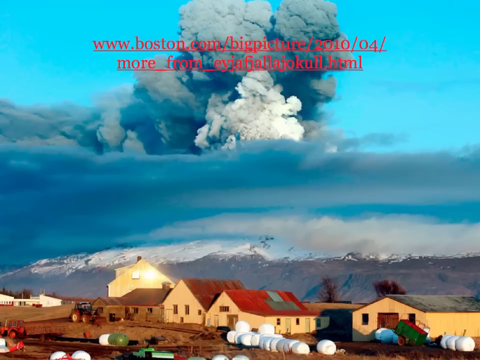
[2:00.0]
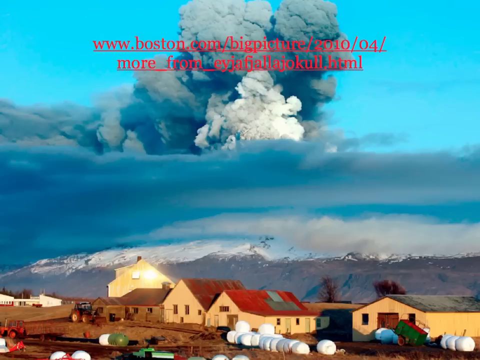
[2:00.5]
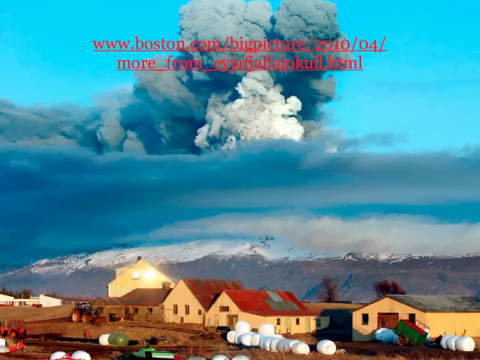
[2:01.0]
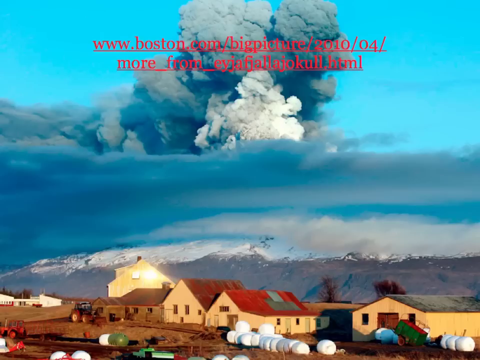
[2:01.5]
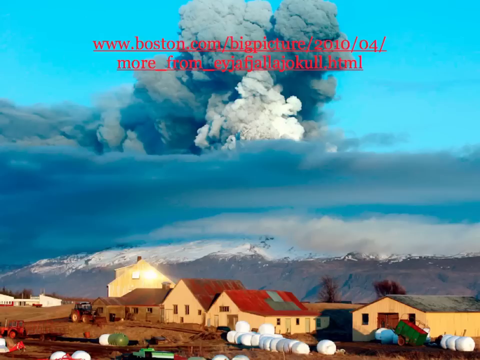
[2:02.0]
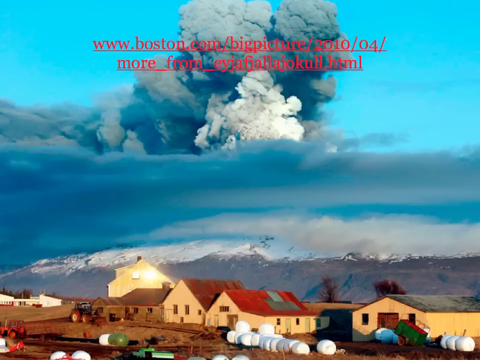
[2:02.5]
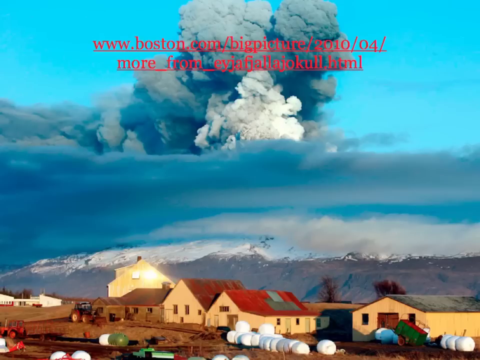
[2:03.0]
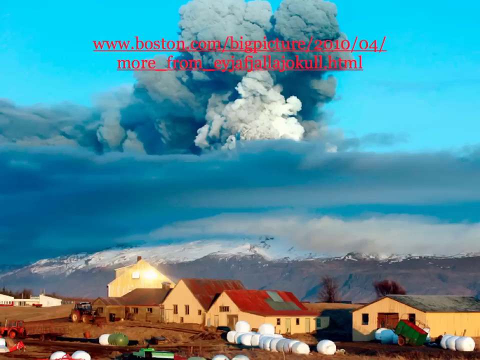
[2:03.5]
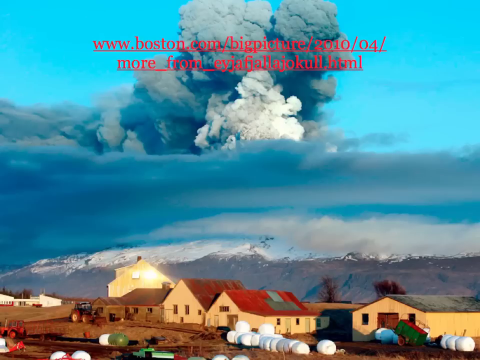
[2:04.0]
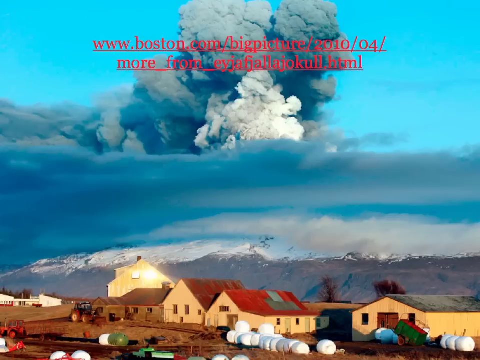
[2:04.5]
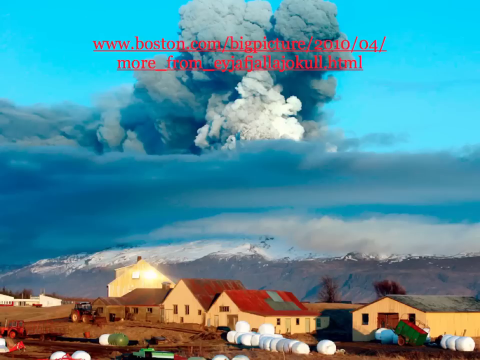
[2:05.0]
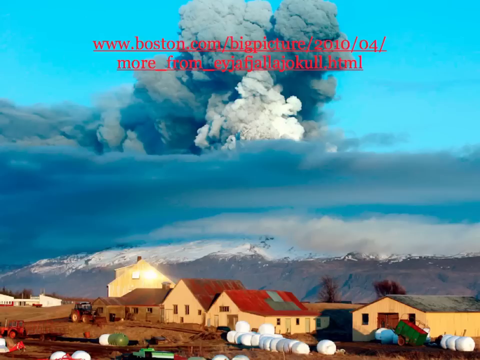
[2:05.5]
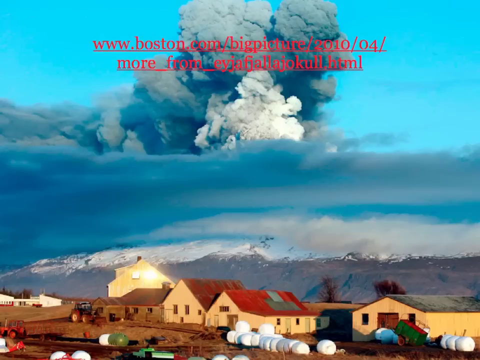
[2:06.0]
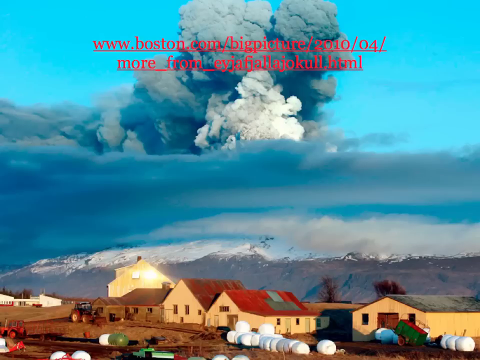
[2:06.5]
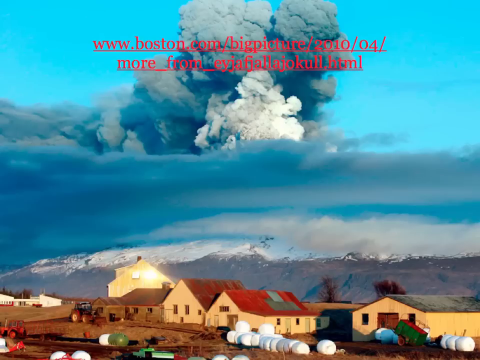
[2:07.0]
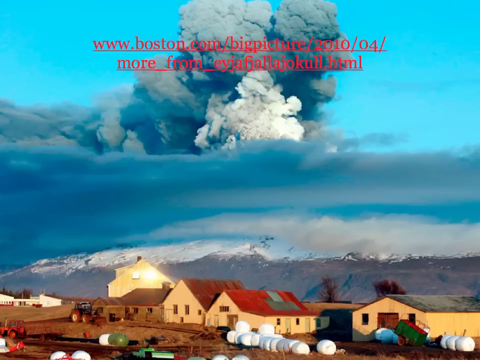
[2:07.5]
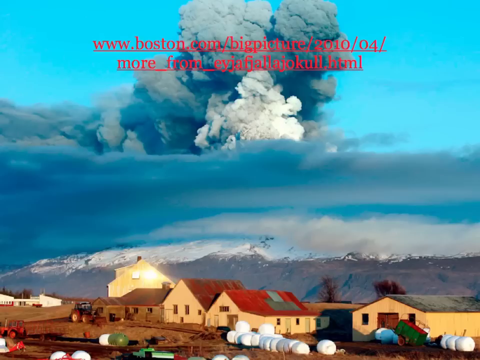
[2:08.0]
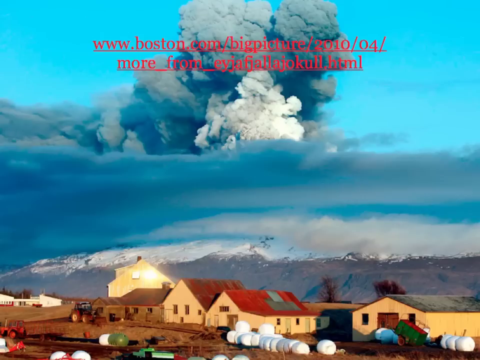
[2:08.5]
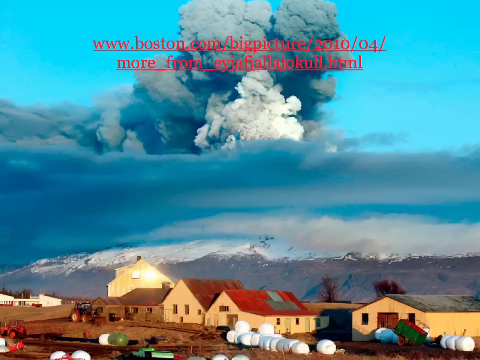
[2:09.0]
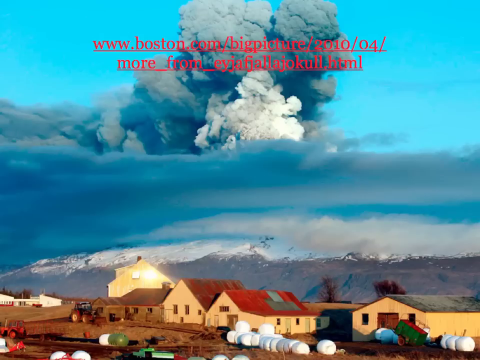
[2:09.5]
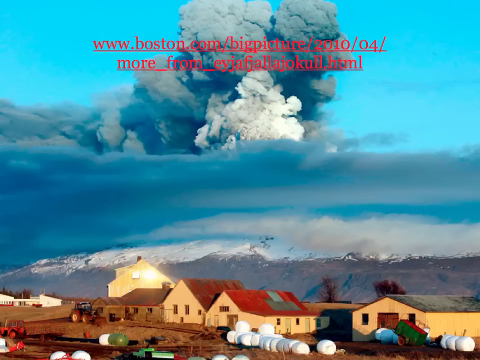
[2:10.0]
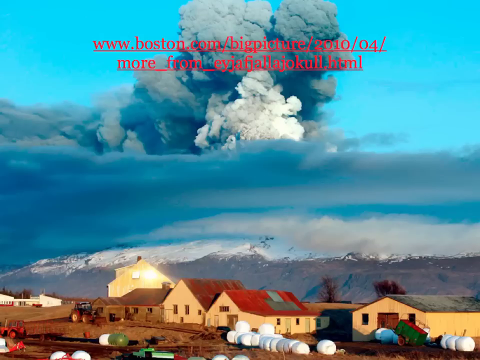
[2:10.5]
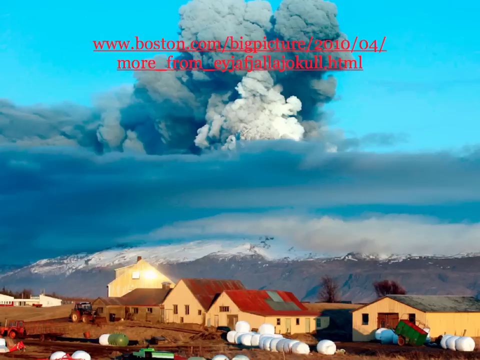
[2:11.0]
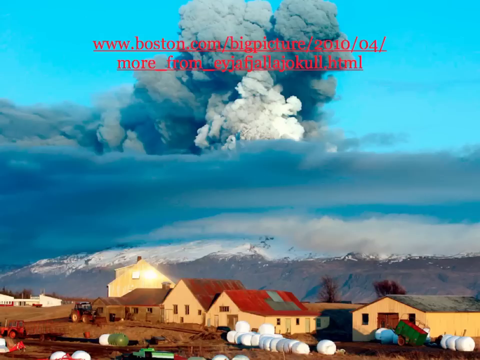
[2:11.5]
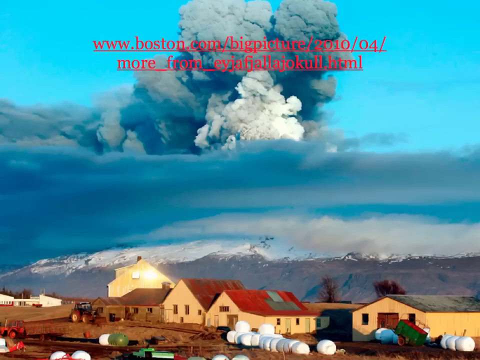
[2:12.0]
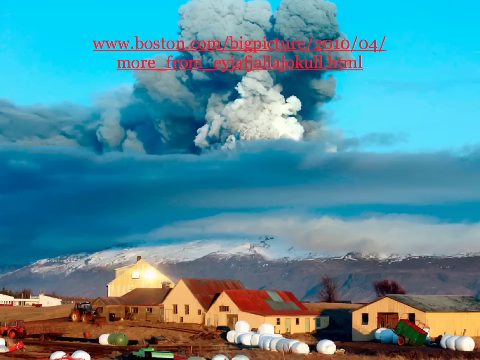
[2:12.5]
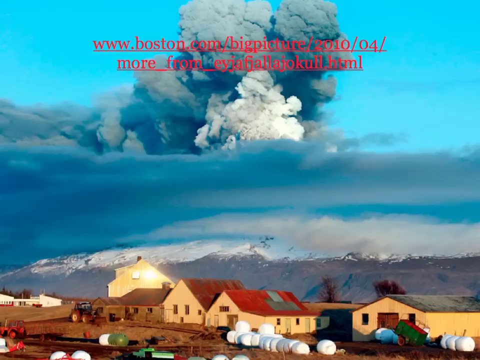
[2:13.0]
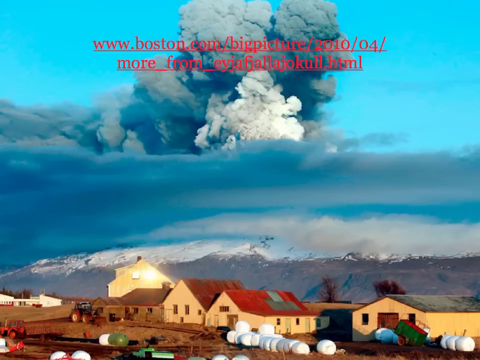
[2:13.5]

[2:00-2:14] An image shows a light blue daytime sky, with gray and white smoke clouds in front of it billowing out from something unseen in the distance. In front of that is more cloud coverage, sort of blue-gray, and below that white. Beneath that are snow-capped mountains. In front of those, at the bottom of the image, are houses all in a row, and it appears to be farmland. There is some farm equipment in a field, like a tractor, and some white circular things that could be hay bales and look like giant marshmallows.